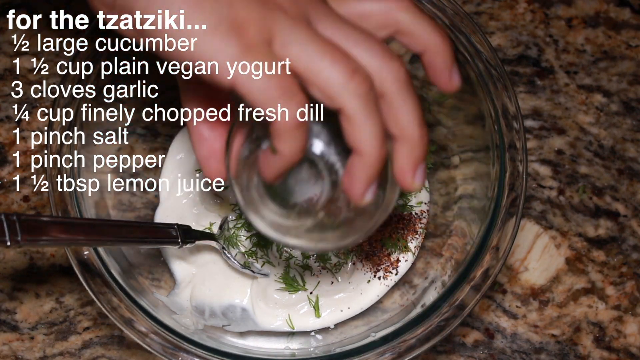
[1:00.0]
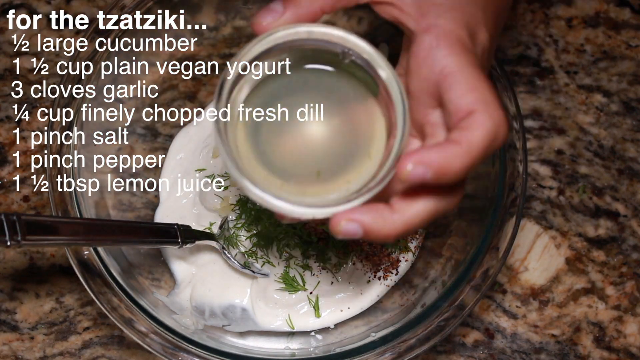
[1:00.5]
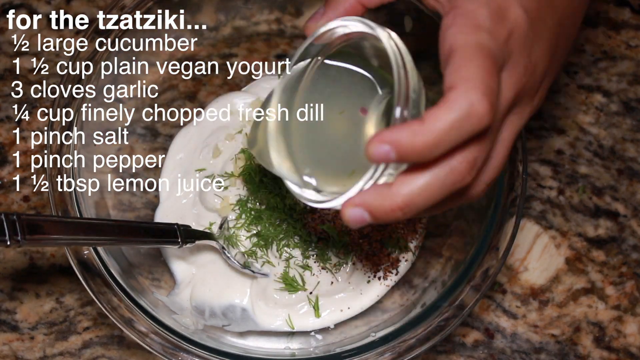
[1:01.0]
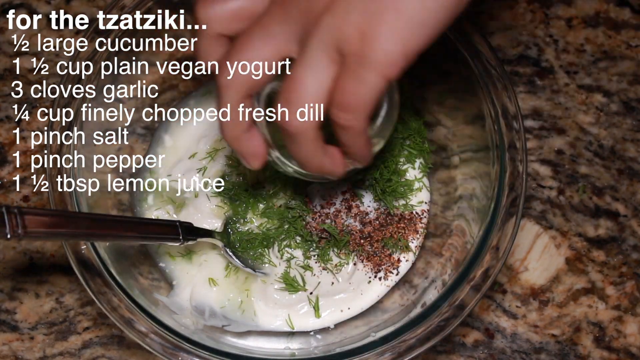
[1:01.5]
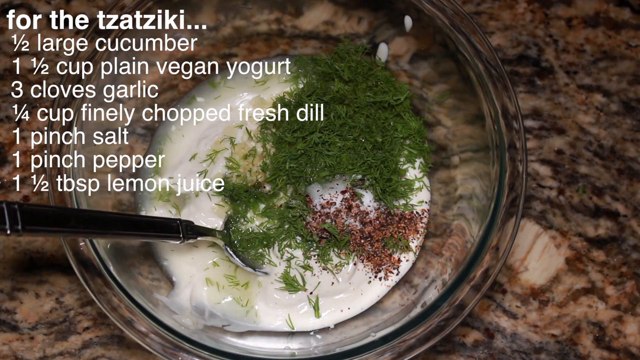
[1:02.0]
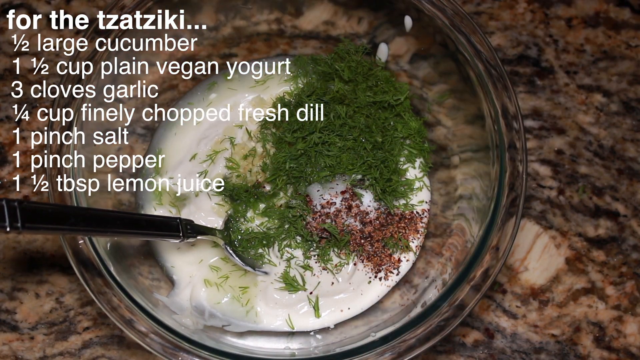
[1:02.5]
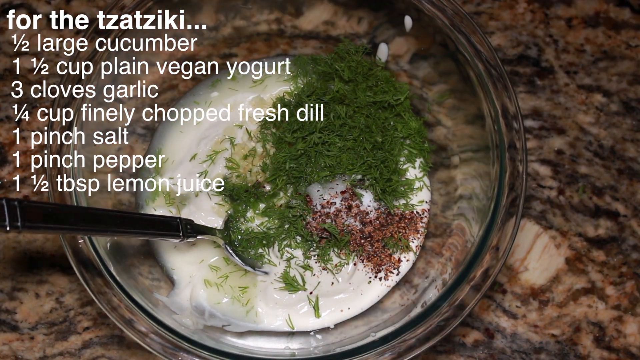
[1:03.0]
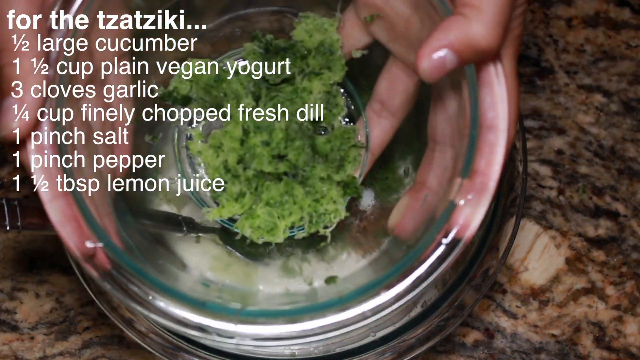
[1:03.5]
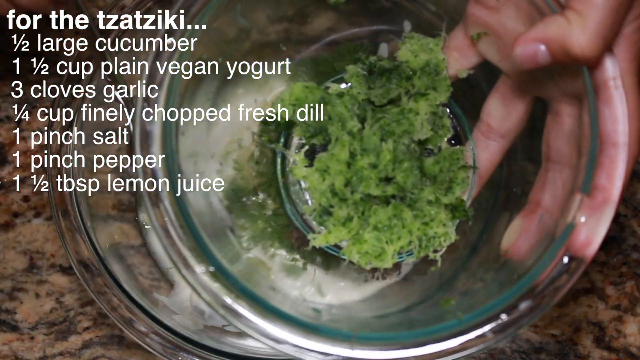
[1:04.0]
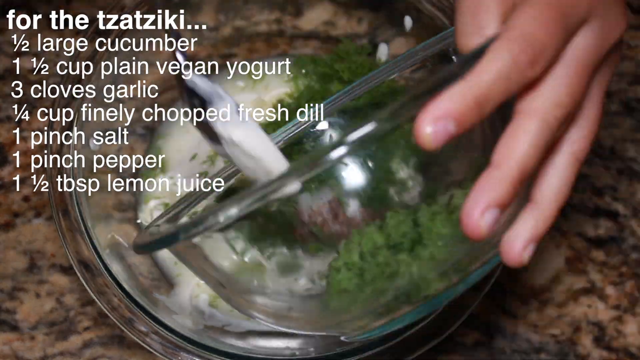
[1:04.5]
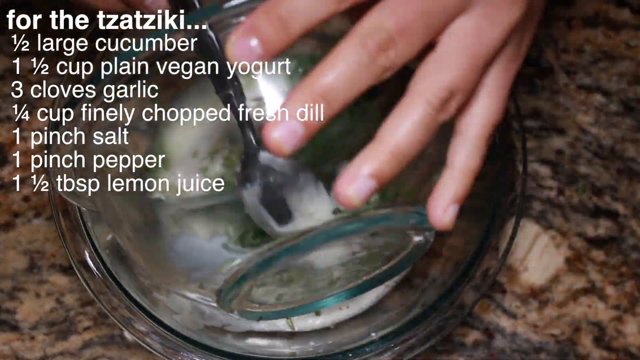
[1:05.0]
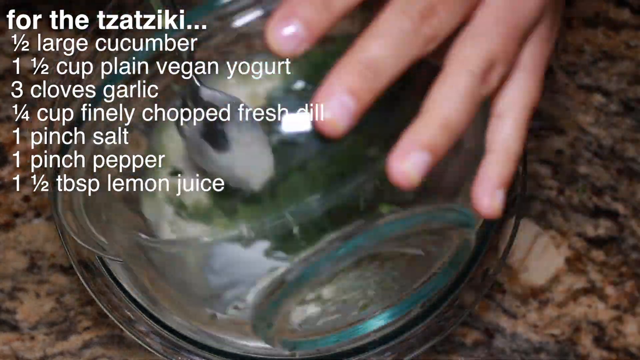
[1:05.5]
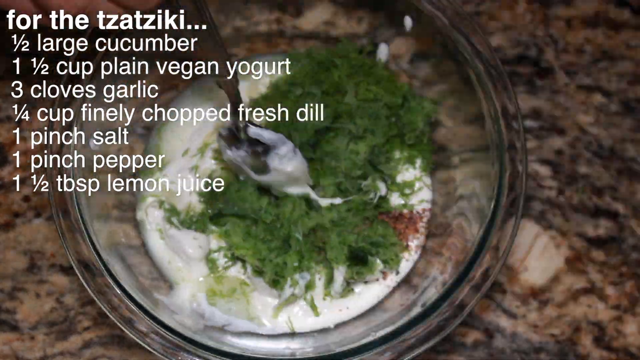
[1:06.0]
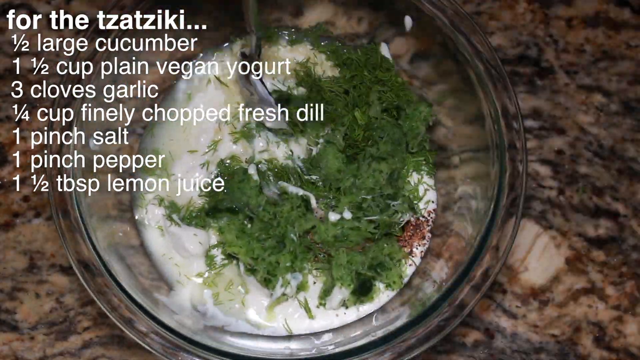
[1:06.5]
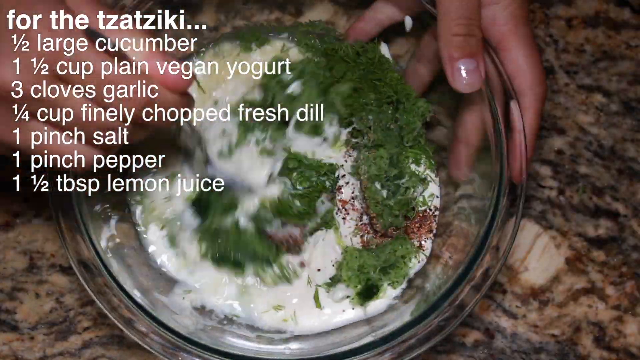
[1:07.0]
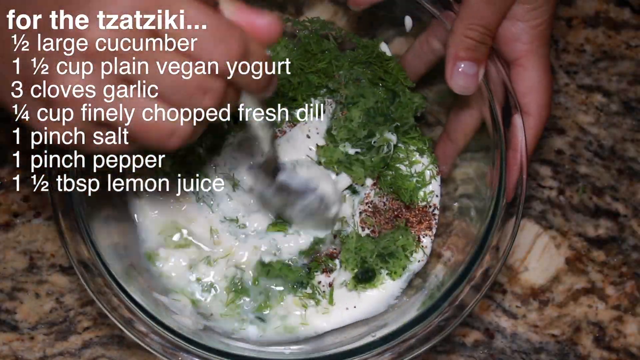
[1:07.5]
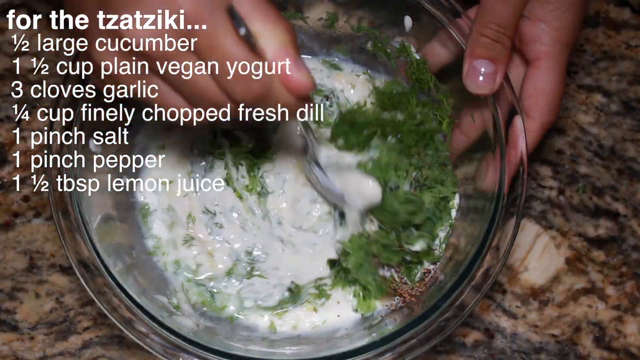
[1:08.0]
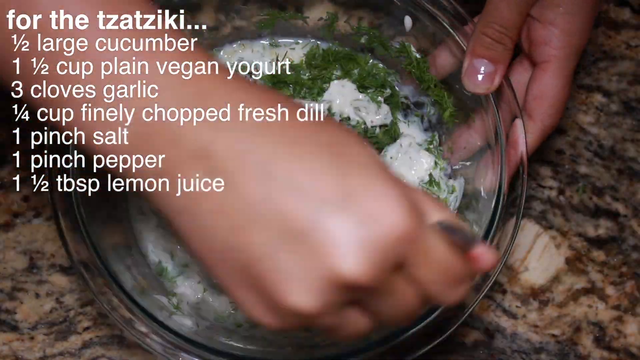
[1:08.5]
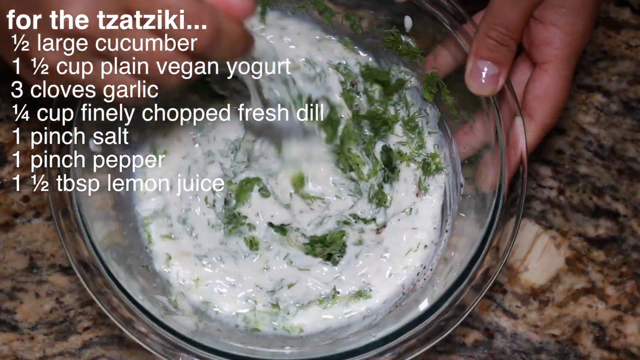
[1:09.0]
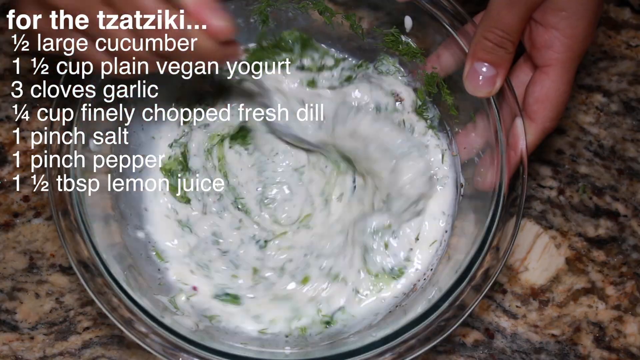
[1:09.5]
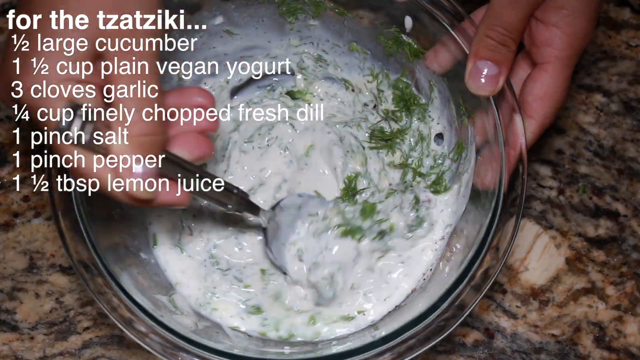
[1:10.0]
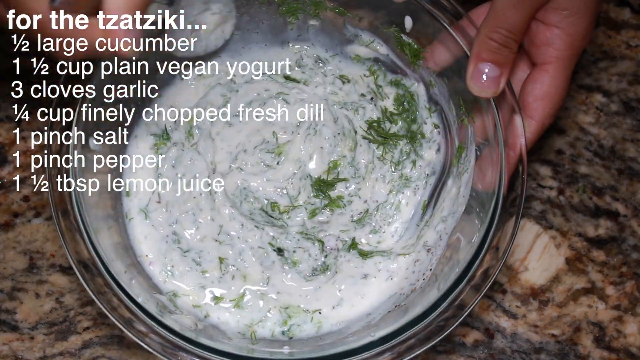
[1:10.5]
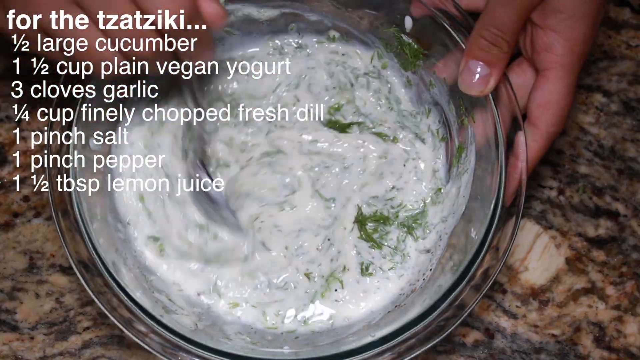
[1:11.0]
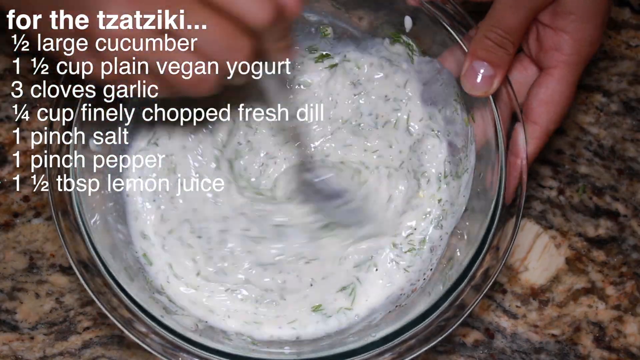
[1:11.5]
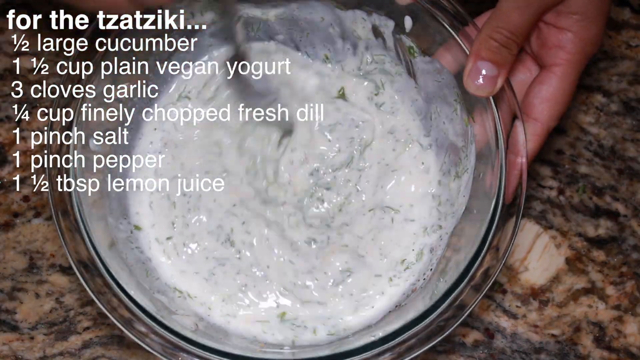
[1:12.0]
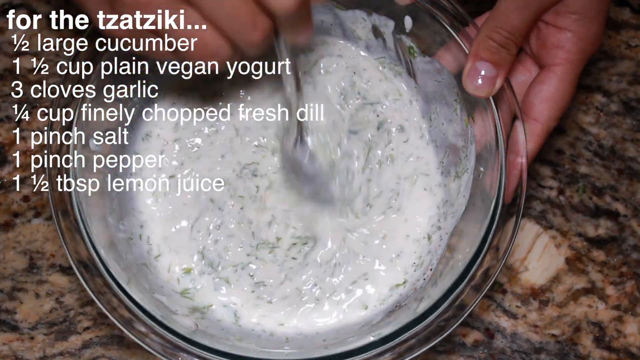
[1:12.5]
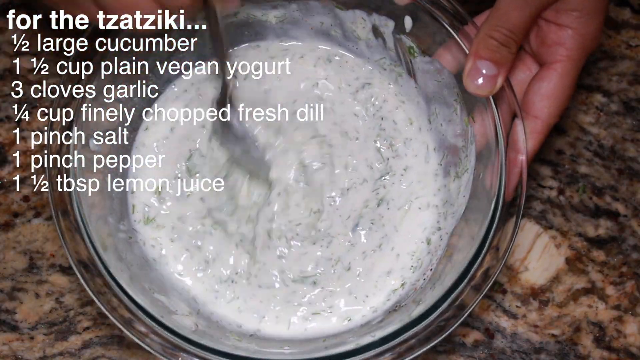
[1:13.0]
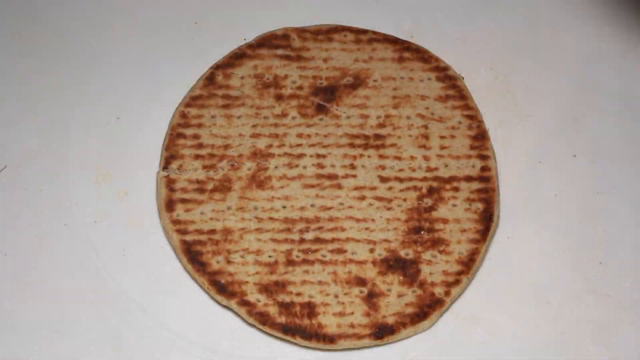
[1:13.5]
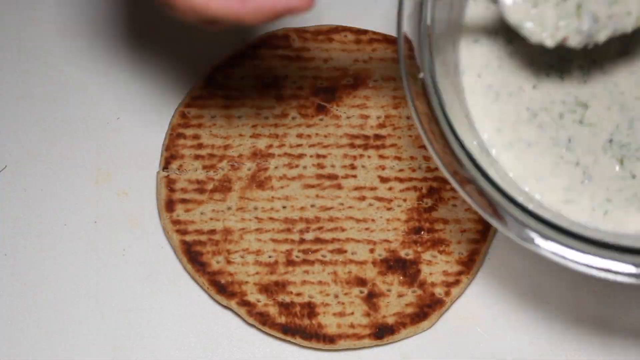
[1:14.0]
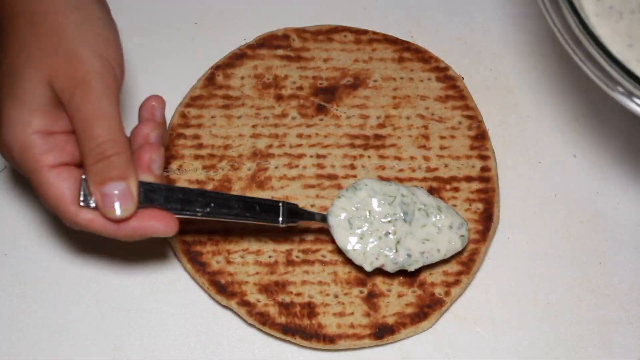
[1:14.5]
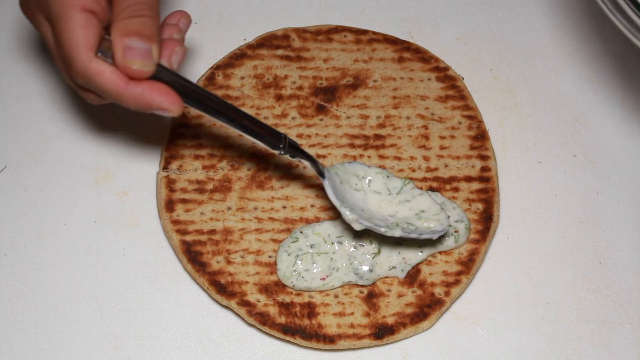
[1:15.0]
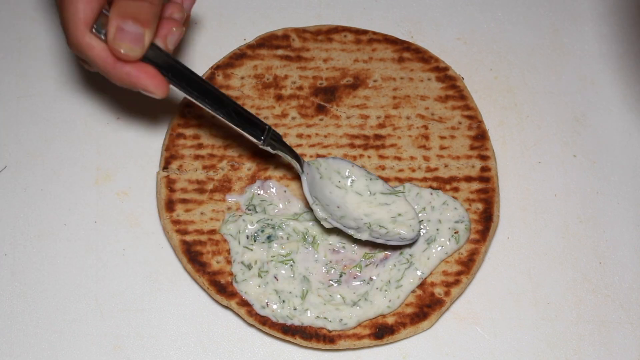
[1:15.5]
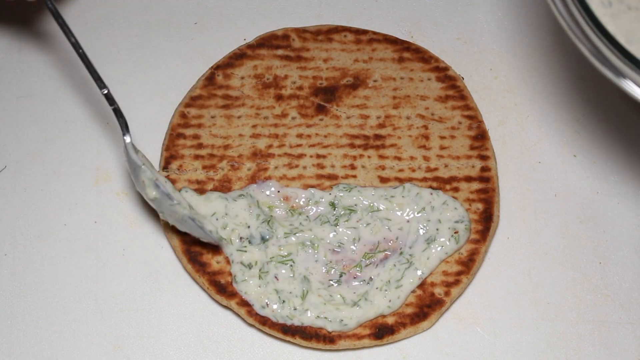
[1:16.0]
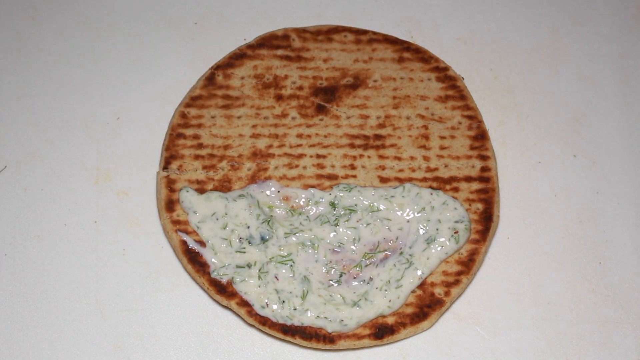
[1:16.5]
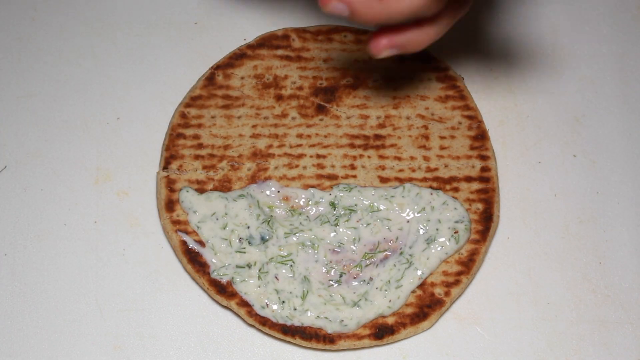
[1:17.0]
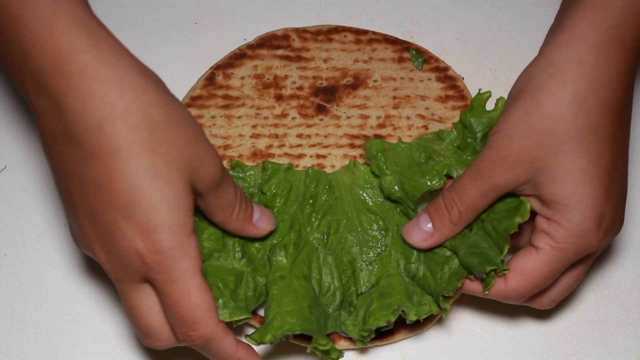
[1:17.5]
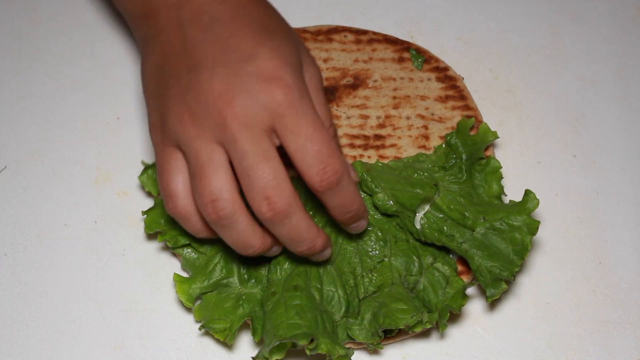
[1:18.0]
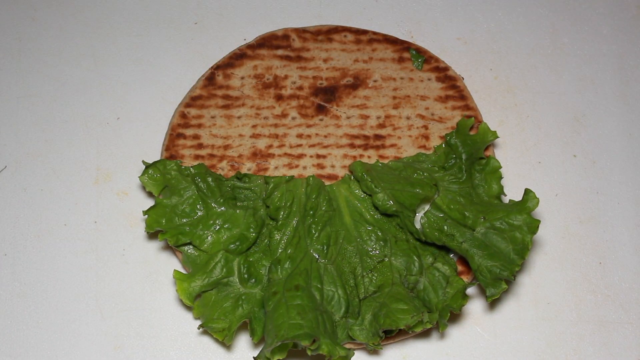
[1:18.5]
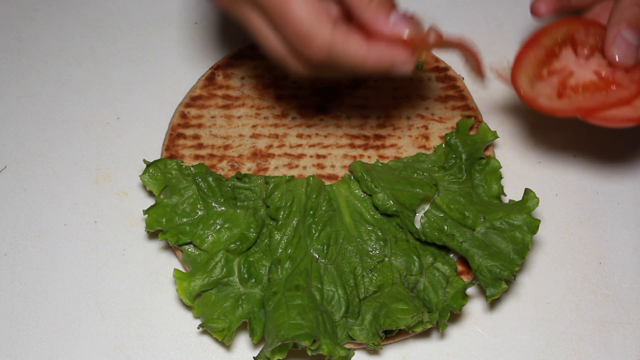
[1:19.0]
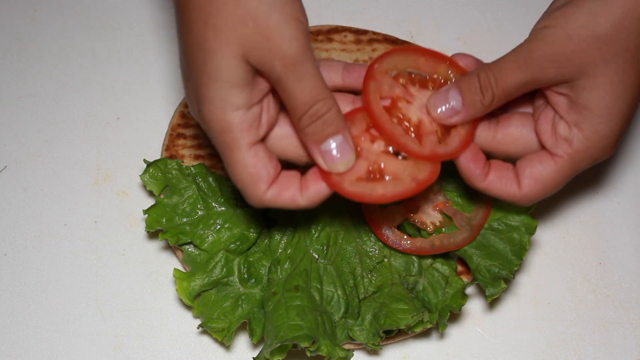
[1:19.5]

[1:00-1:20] In a kitchen, the cook, a white woman aged about 25 to nearly 30, is making a chickpea recipe and tzatziki. She has finished preparing and slicing her chickpeas and is now making the tzatziki. It contains half a large cucumber that she grated and squeezed of all its fluids with a straining cloth. She adds half a cup of plain vegan yogurt, three garlic cloves, coarsely chopped fresh dill, a pinch of salt, a pinch of black pepper and one and a half tablespoons of lemon juice, and stirs the ingredients with a silver spoon with a black handle. From a top view, she puts a toasted circular flatbread on the white table. Using the silver spoon, she spreads the tzatziki over half of the flatbread. She then places a lettuce leaf on that half, along with four slices of red, ripe tomatoes.